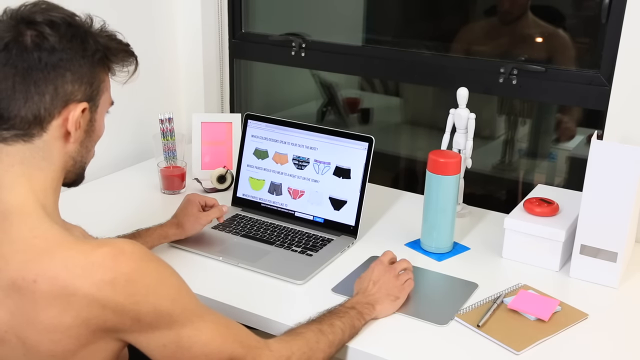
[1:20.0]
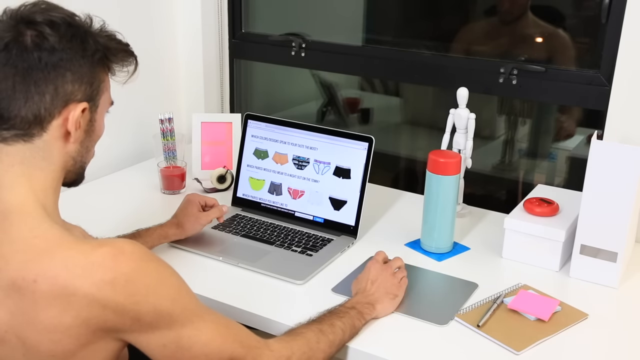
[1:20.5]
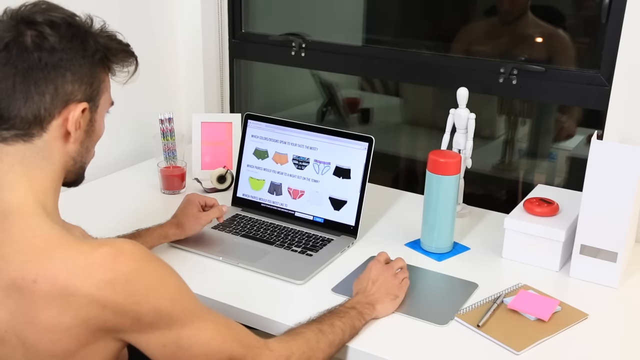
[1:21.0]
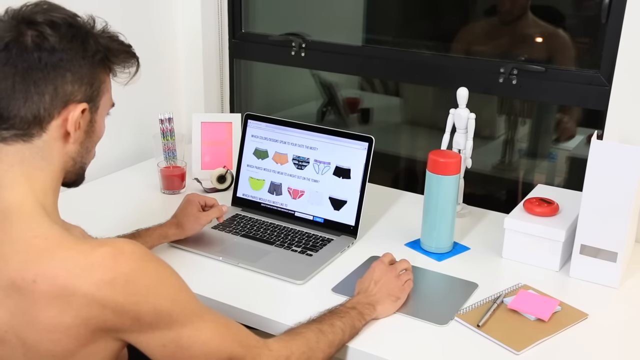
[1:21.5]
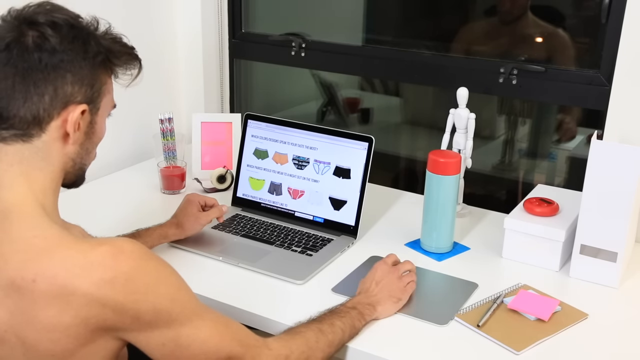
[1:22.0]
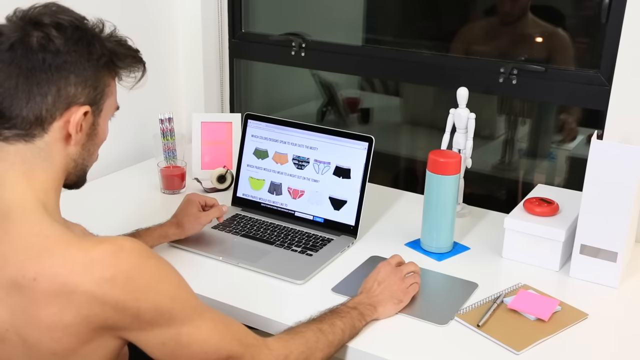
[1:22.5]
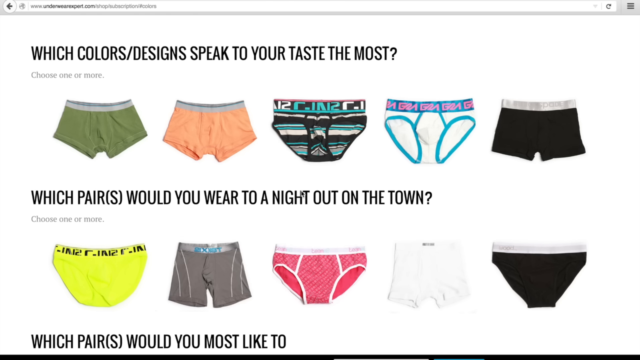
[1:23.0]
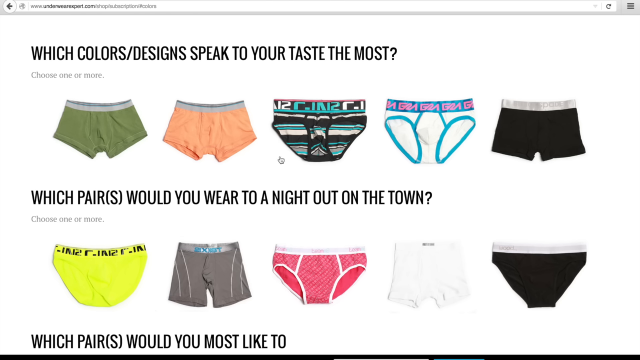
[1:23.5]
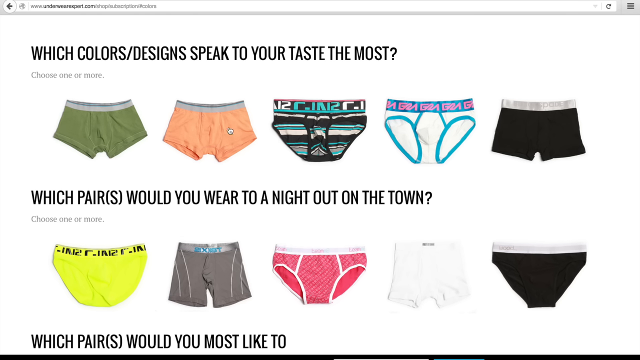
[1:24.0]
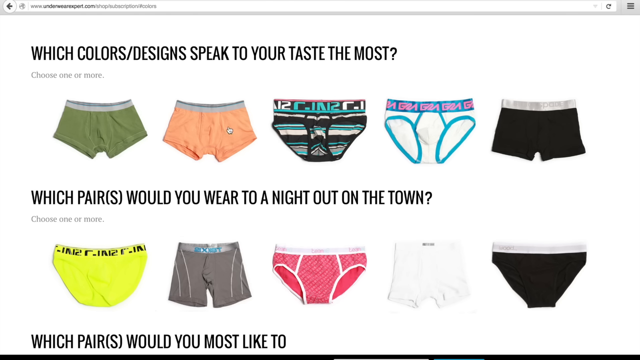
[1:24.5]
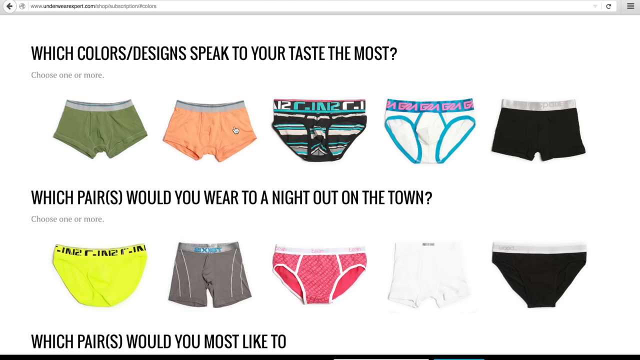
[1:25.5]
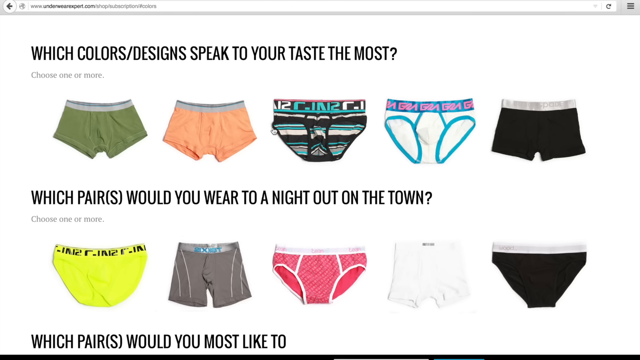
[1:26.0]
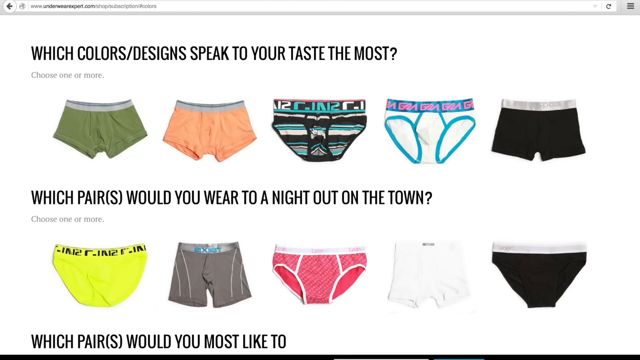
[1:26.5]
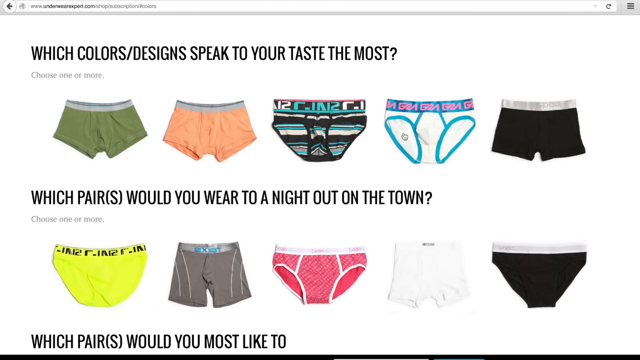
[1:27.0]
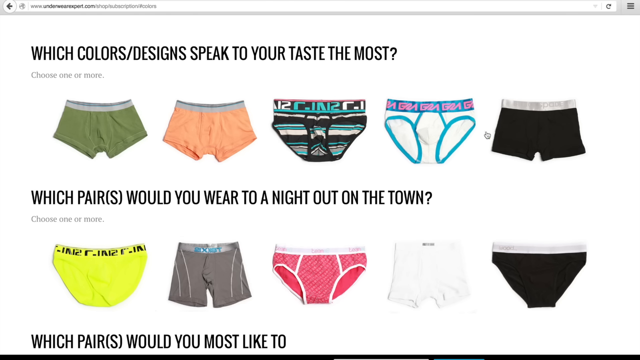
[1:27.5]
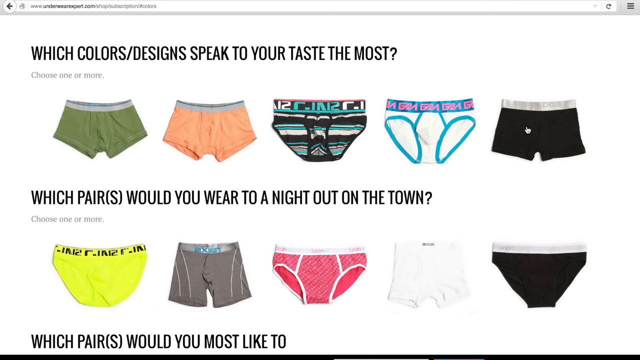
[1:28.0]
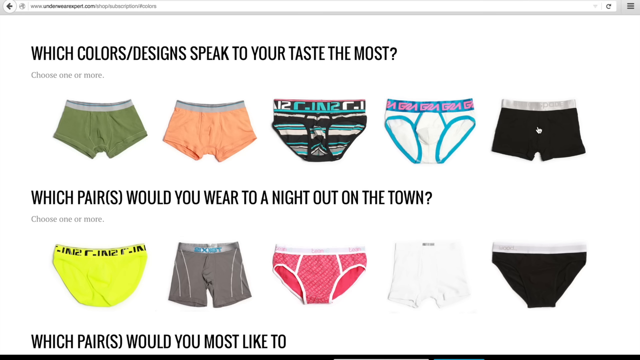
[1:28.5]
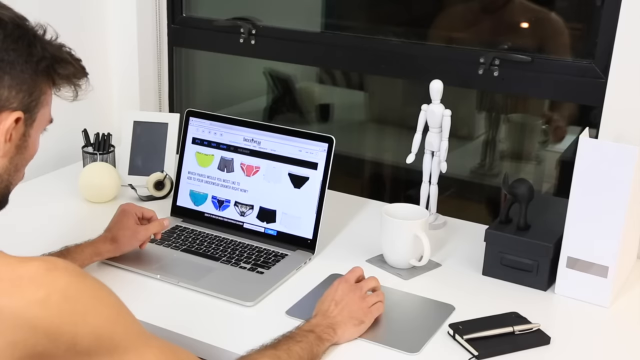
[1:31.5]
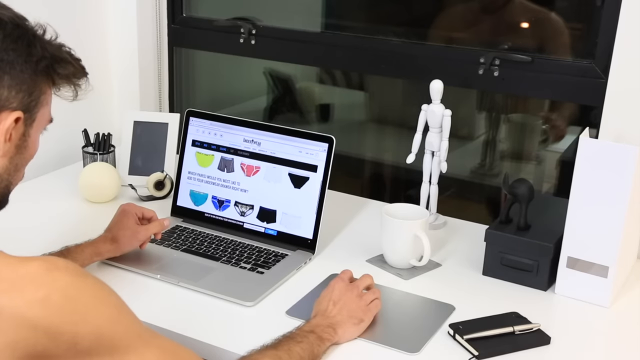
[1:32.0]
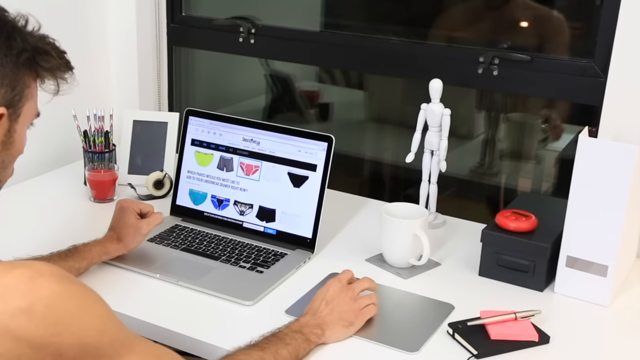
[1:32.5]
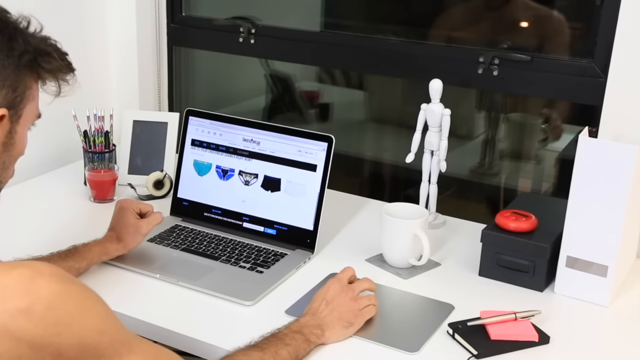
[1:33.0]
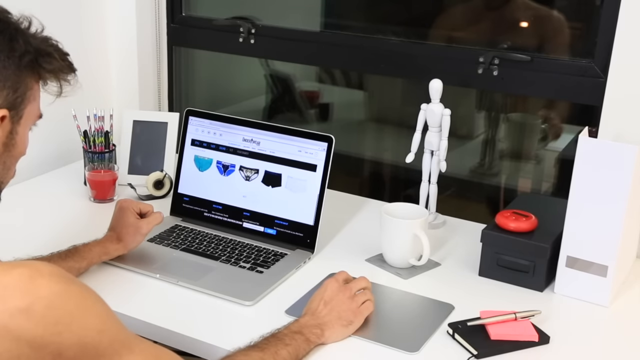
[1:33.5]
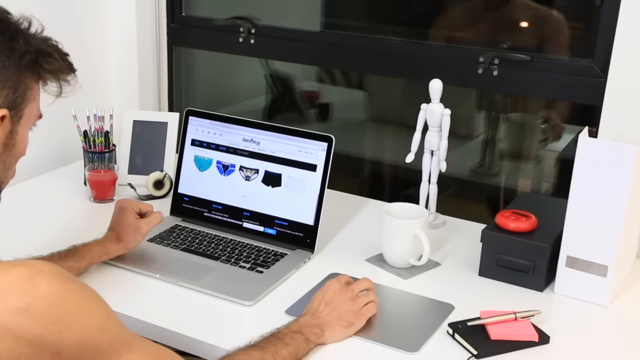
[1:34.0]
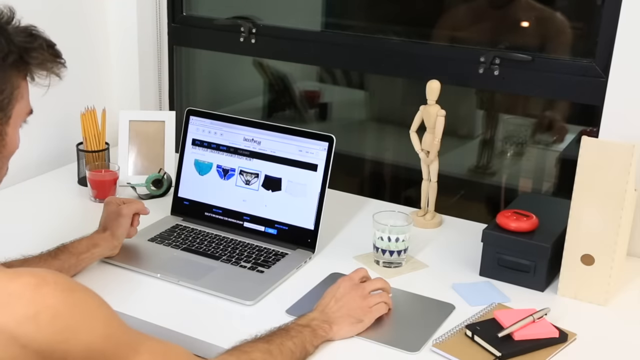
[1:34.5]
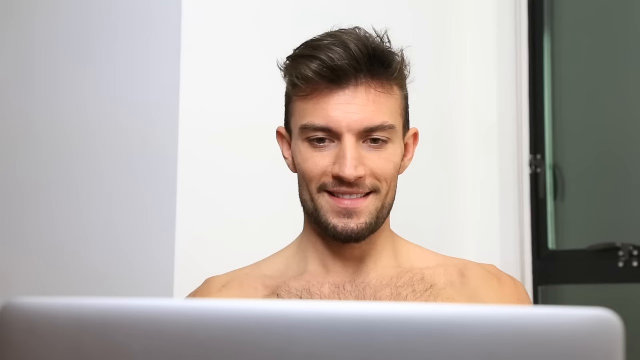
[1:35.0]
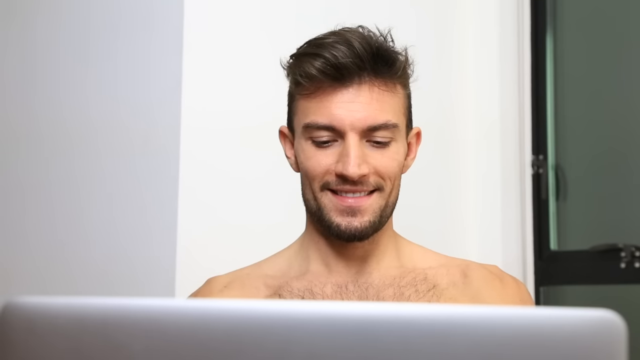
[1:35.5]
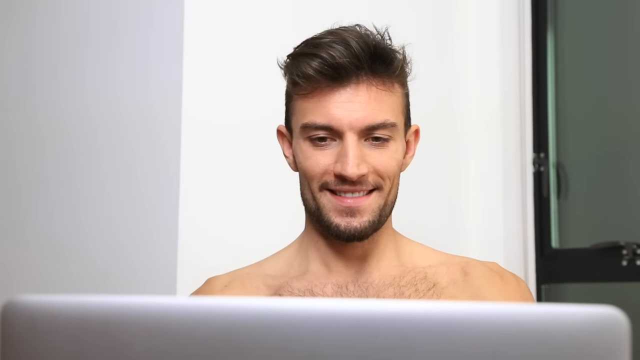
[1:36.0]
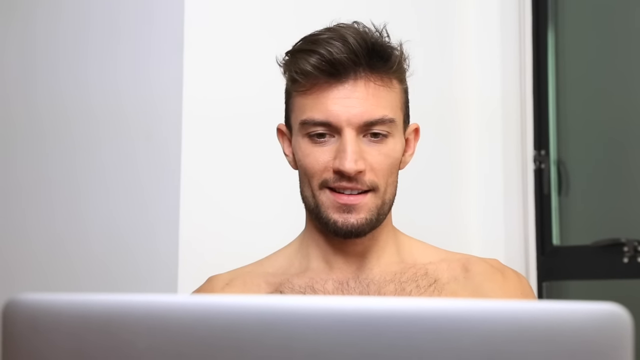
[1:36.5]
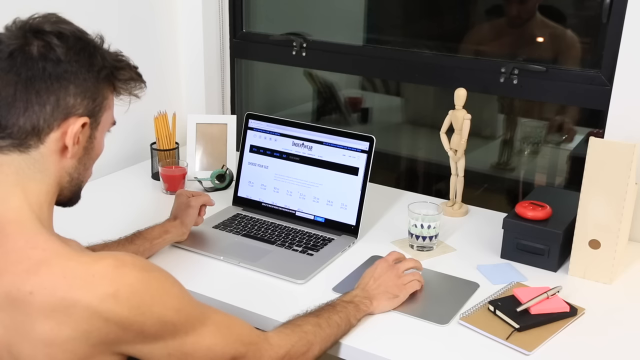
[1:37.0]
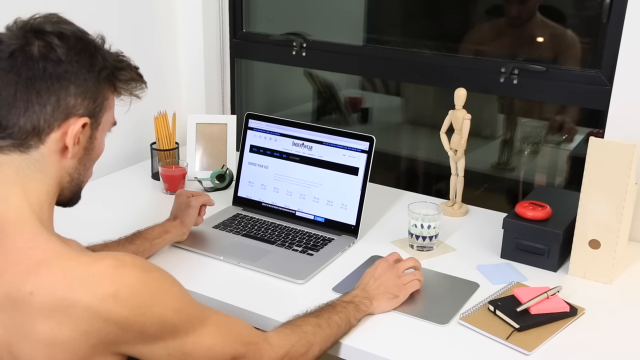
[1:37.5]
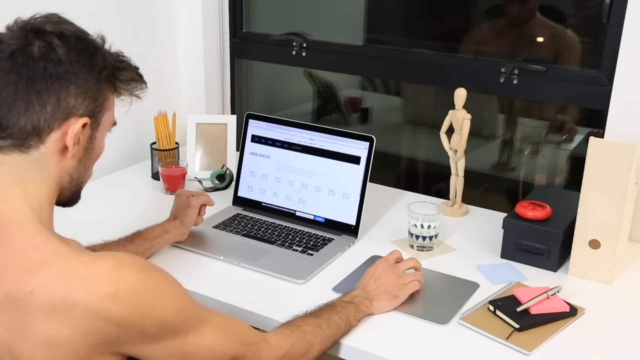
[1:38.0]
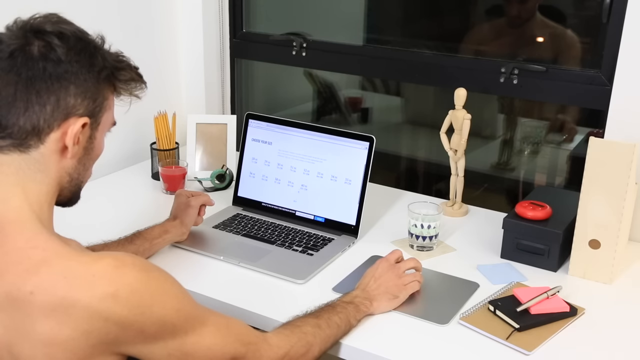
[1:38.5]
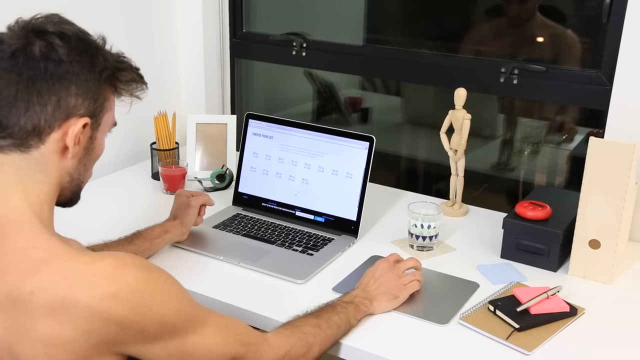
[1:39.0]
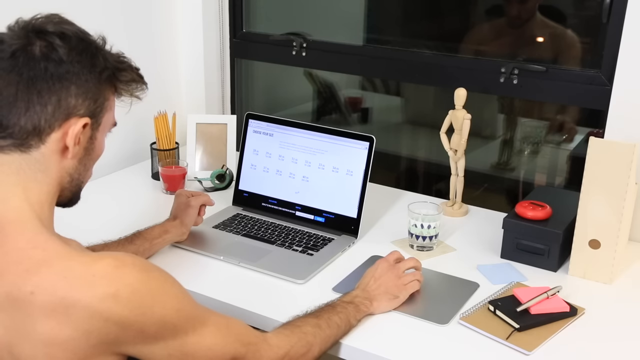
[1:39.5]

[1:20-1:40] The man scrolls using a mouse on the desk and opens another page on the laptop showing different designs of underwear. A headline reads "which color stroke designs speak to your taste the most?" The first row has five pairs of underwear, the first green and the last black. On a second page, a caption reads "which pair will you wear to a night out on the town?" and another reads "which one of them?", with different designs ranging from a yellow one to a black one. The cursor moves from one pair to another as the man scrolls. The video shows the man scrolling through the laptop, focuses on his face, and ends with him scrolling through the laptop.